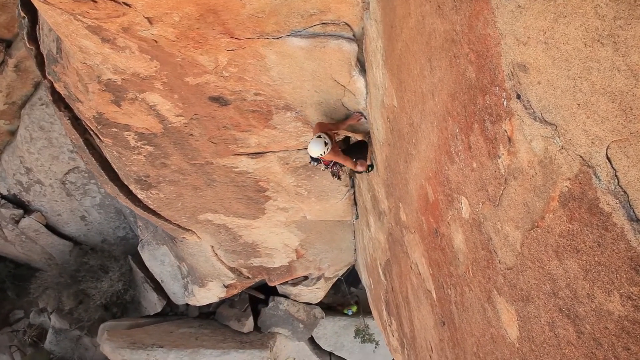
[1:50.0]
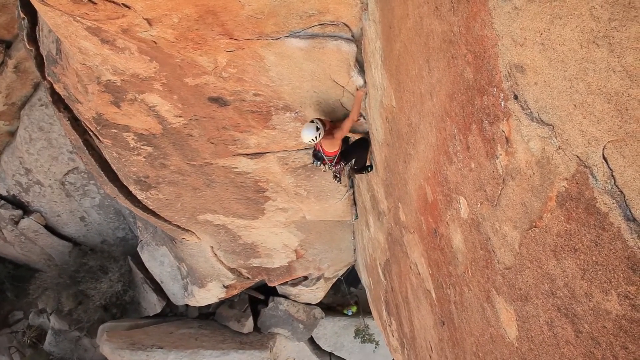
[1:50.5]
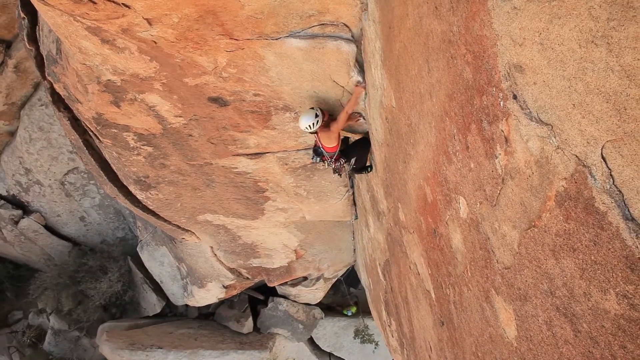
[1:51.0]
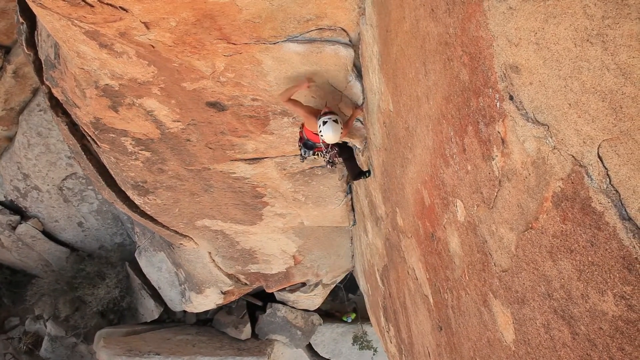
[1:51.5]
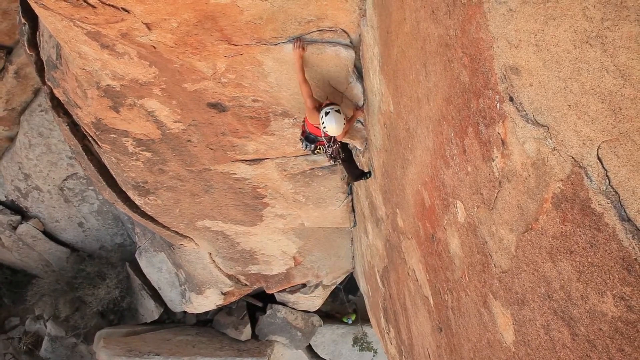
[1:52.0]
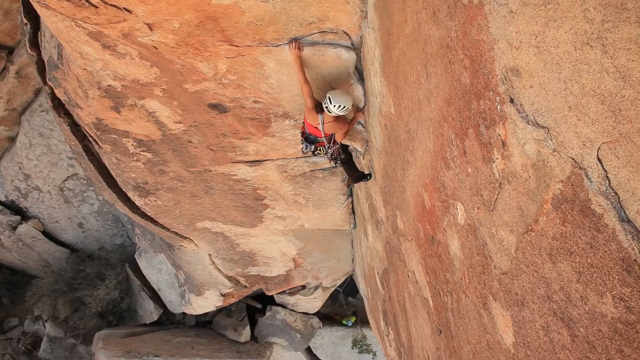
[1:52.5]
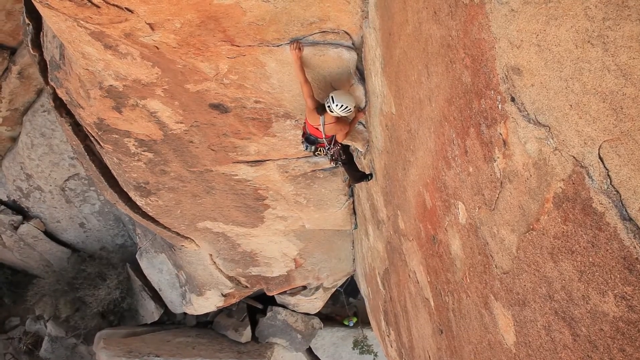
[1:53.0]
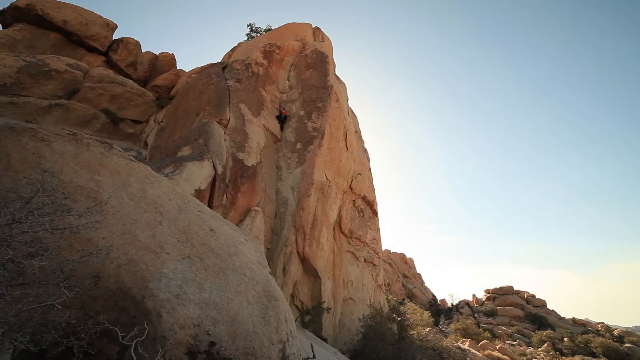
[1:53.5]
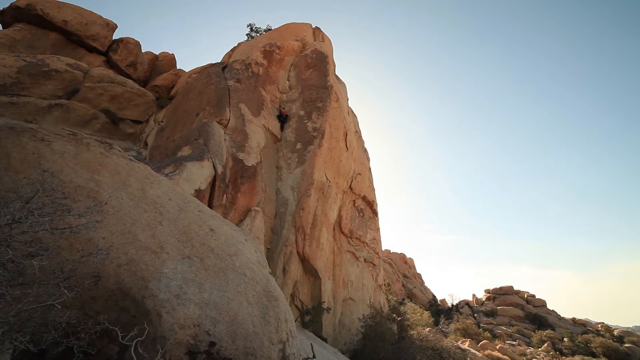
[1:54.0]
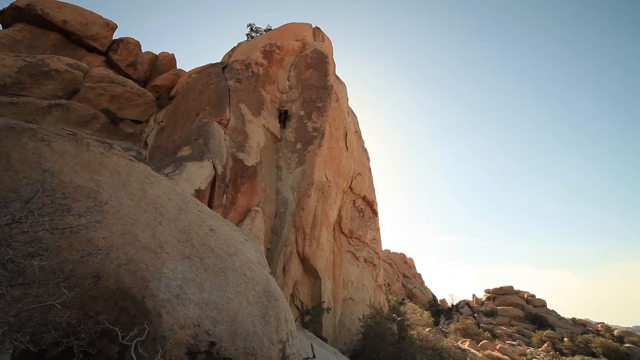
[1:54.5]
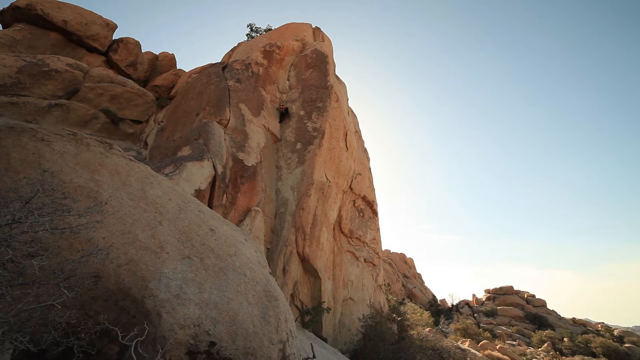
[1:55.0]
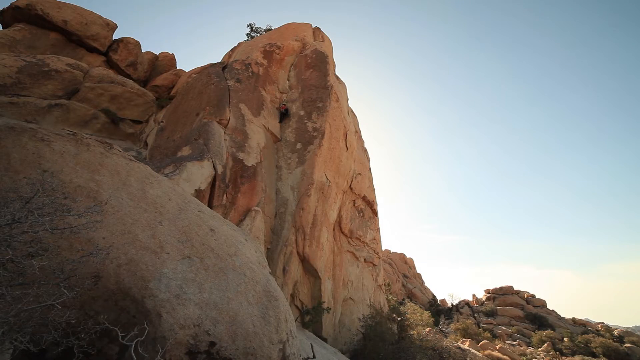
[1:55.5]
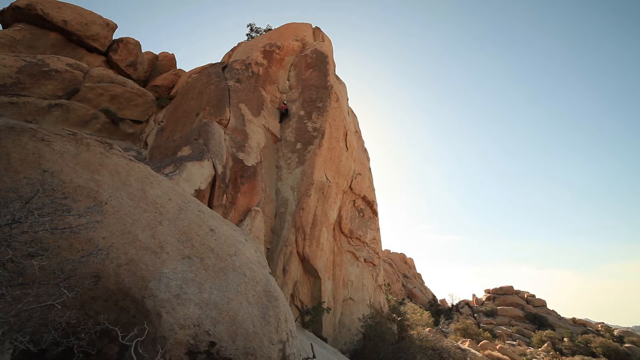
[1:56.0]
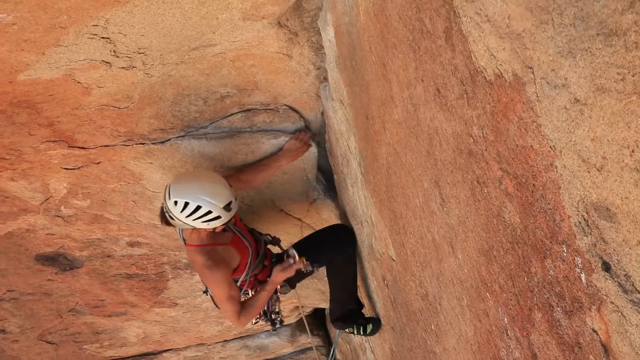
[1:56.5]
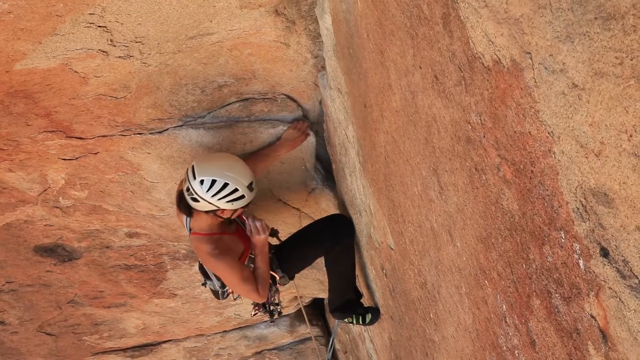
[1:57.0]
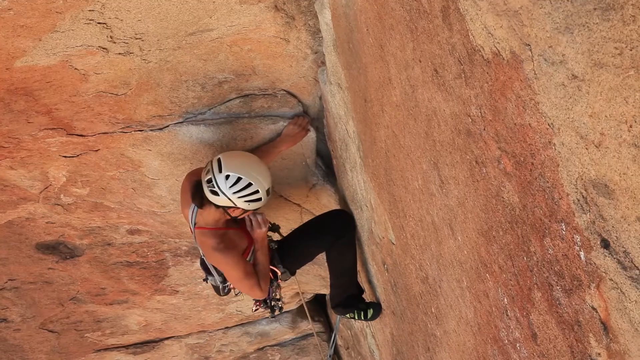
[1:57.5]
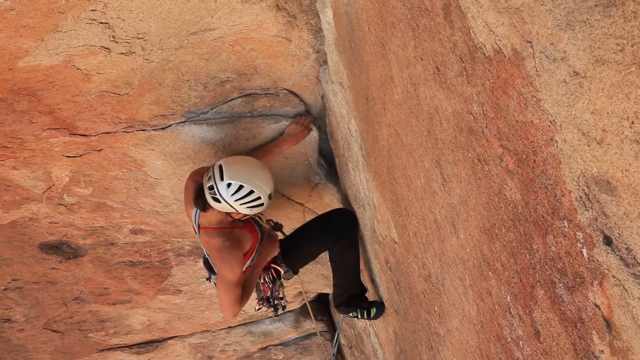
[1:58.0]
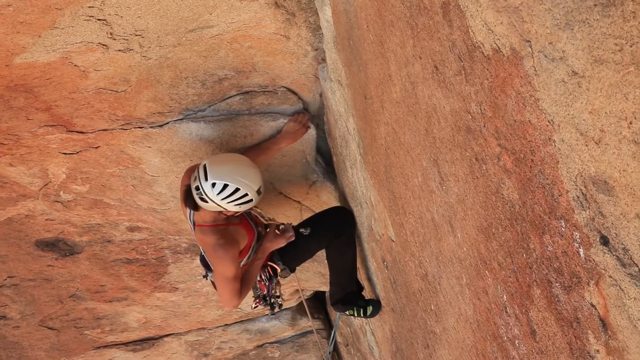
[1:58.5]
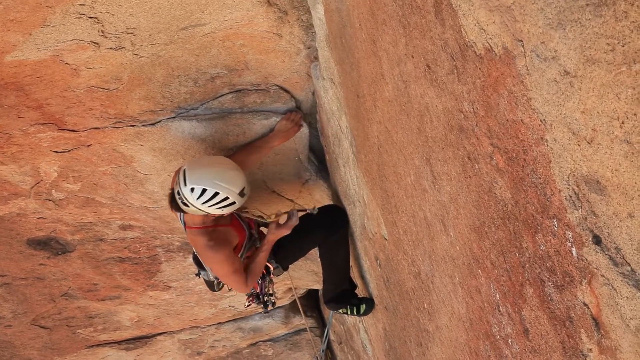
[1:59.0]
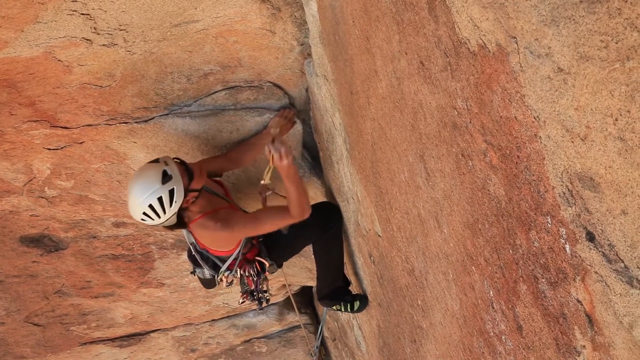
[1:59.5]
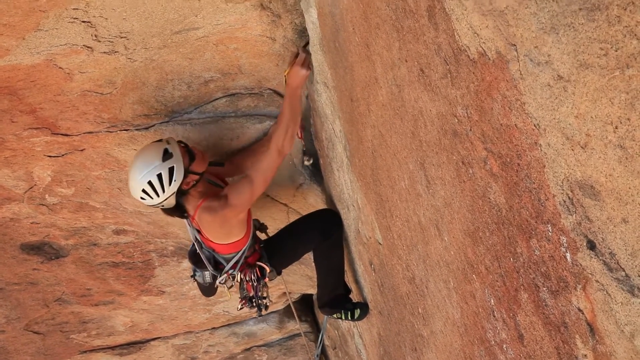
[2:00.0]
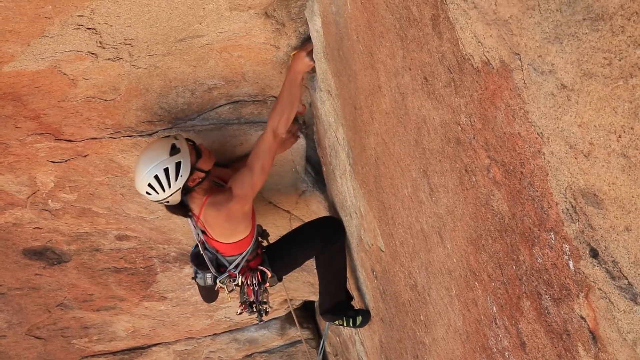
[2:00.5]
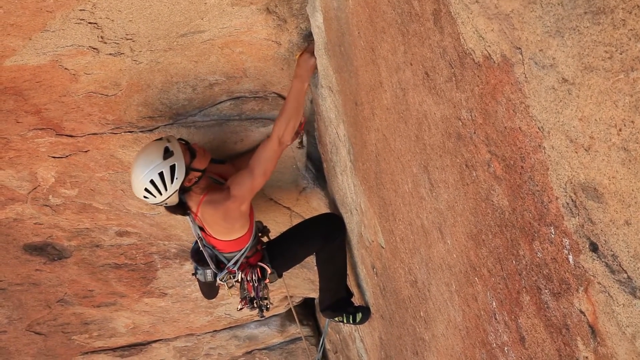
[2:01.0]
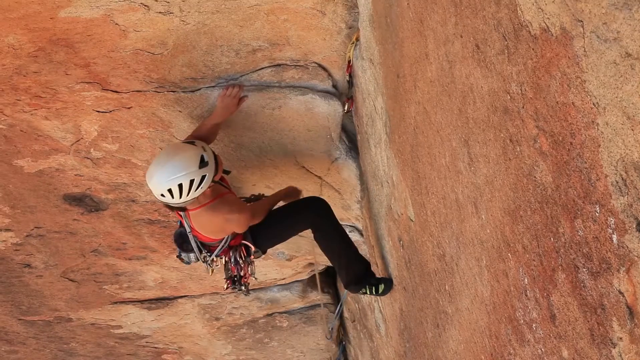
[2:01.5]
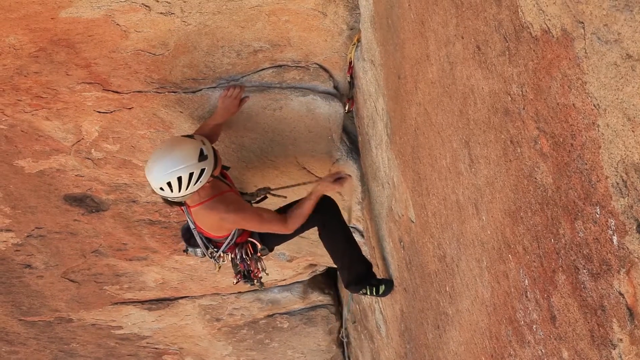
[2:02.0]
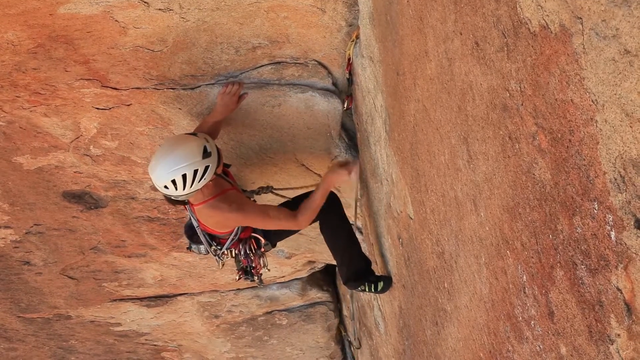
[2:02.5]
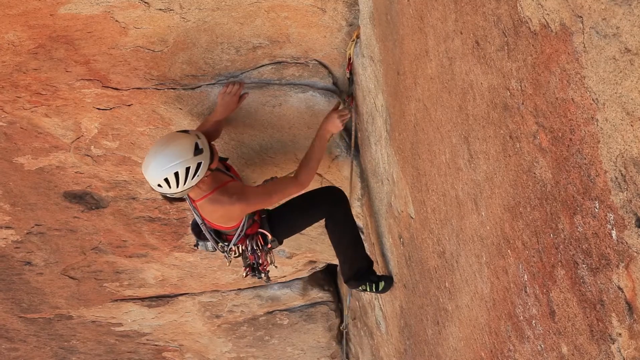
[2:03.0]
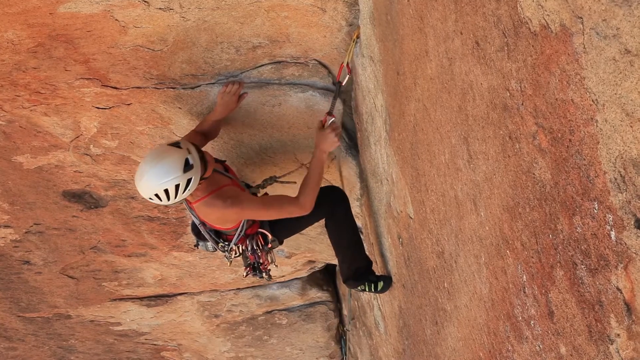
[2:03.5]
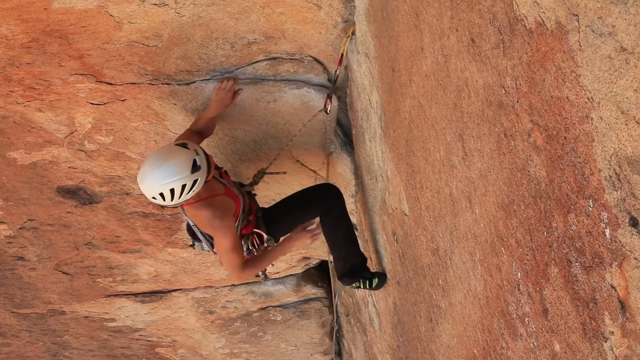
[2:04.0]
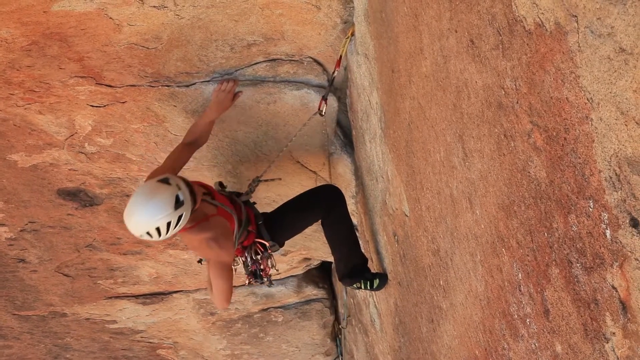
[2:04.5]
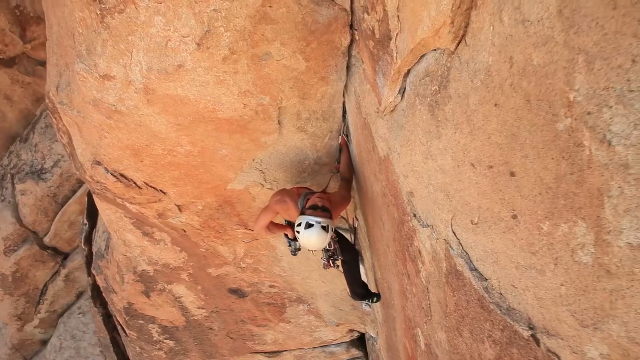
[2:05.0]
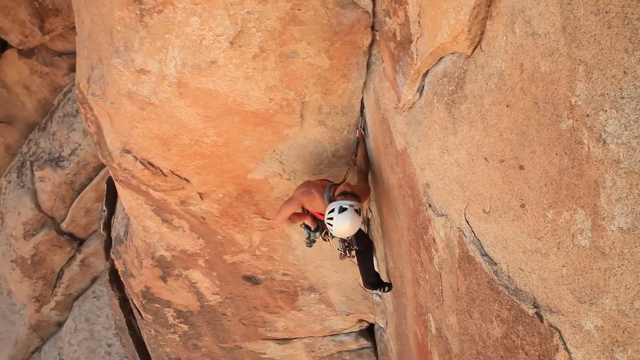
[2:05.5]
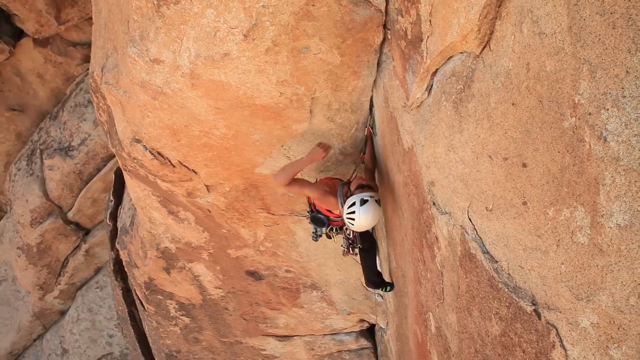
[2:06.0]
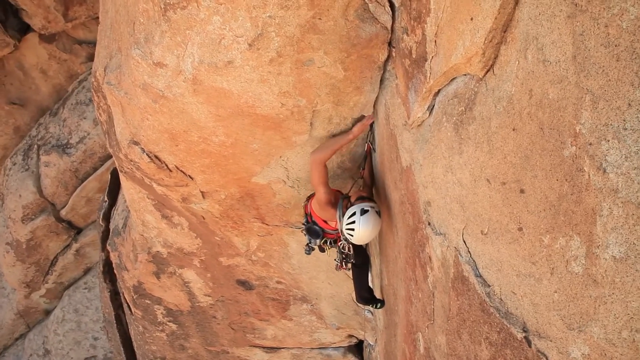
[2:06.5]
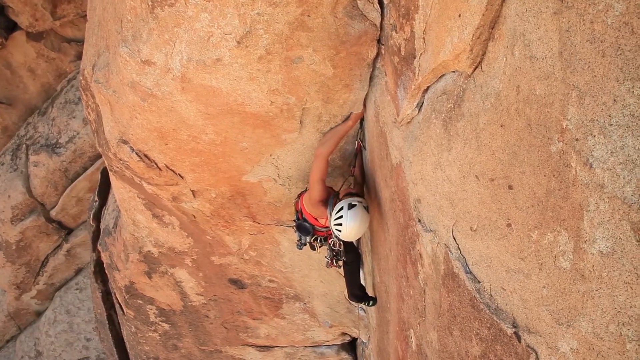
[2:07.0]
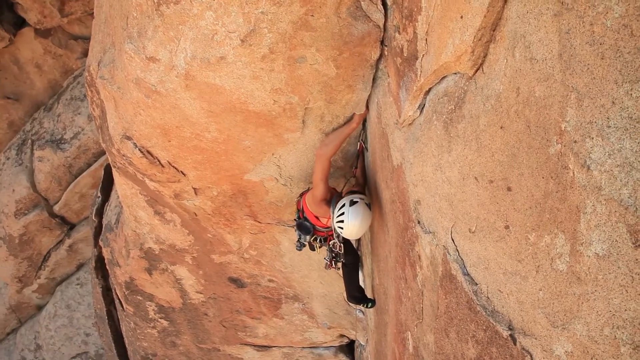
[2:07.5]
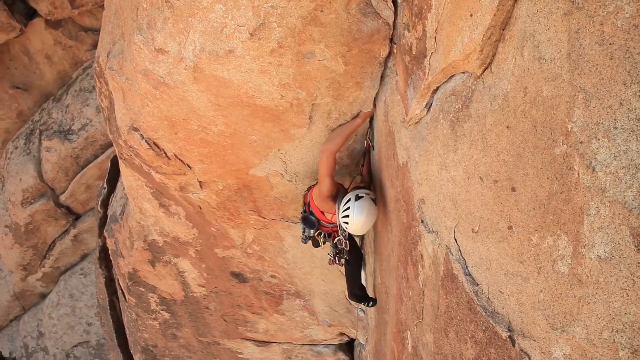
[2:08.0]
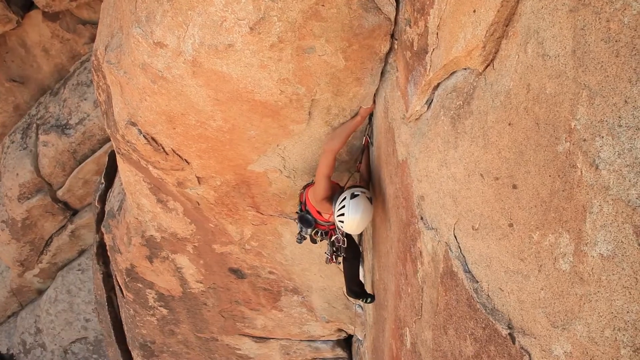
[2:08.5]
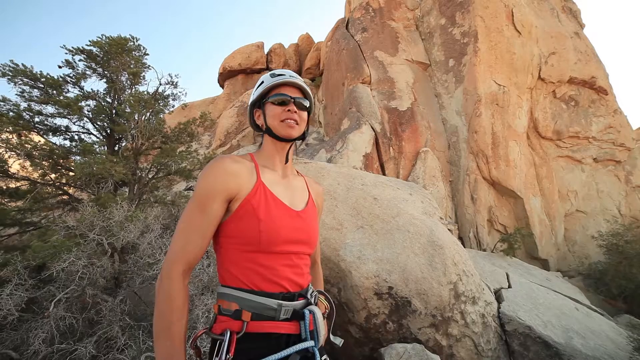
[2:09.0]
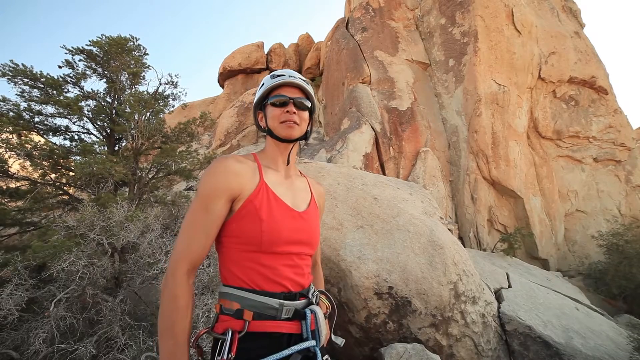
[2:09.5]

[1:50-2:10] A woman climbs up the side of a rock mountain and is very high up. A man all the way at the bottom looks really small and wears a neon yellow shirt. The woman, in a white helmet, pink shirt and black pants, is almost at the top, making her way grip by grip. The camera zooms out, showing she is very close to the top. She gets into the little grooves of the rock and ties a rope. She looks like she might be getting a little tired. At the end she talks to the camera.